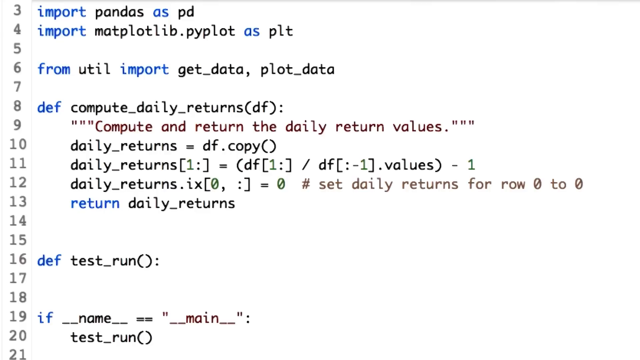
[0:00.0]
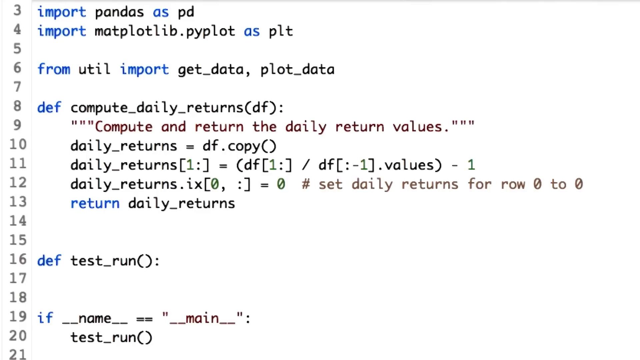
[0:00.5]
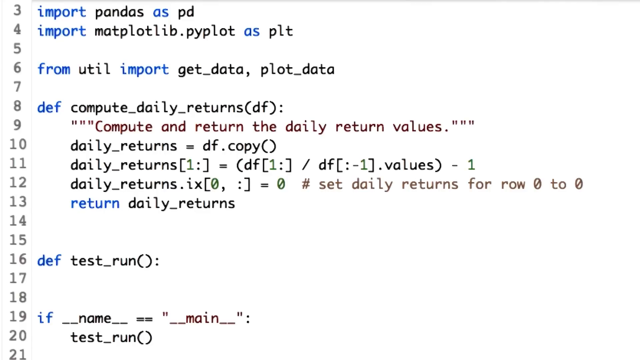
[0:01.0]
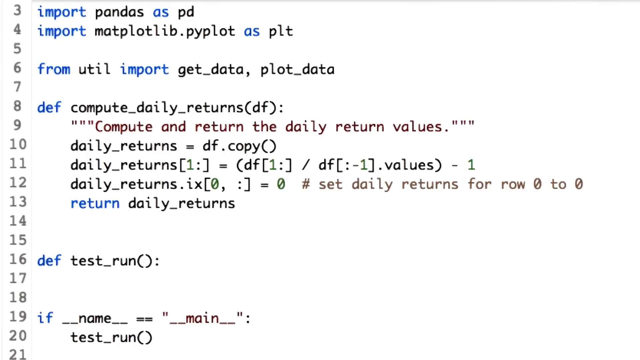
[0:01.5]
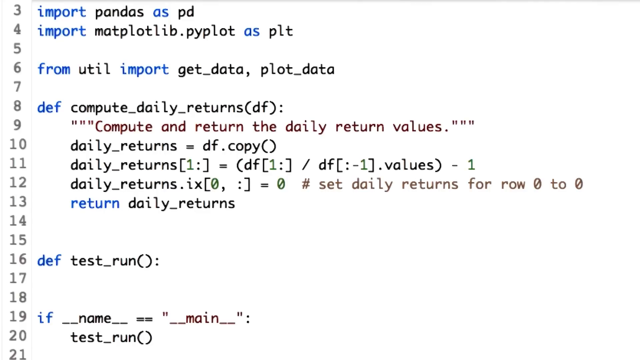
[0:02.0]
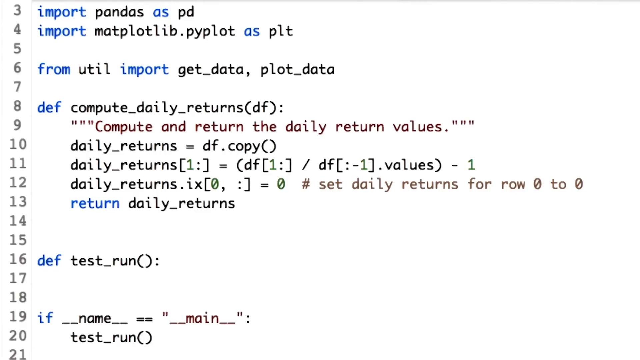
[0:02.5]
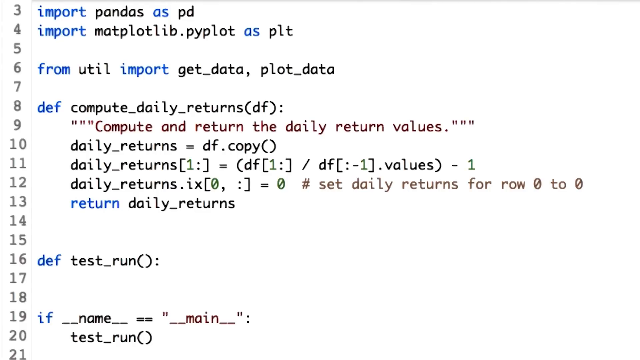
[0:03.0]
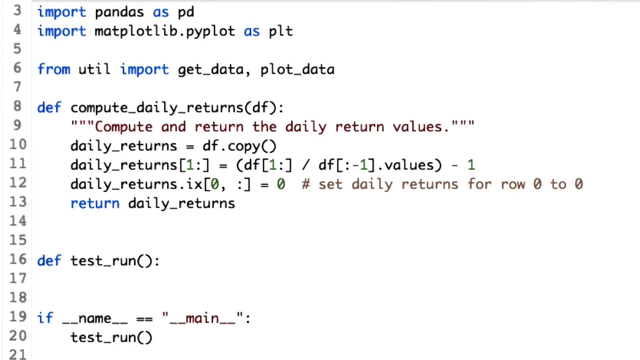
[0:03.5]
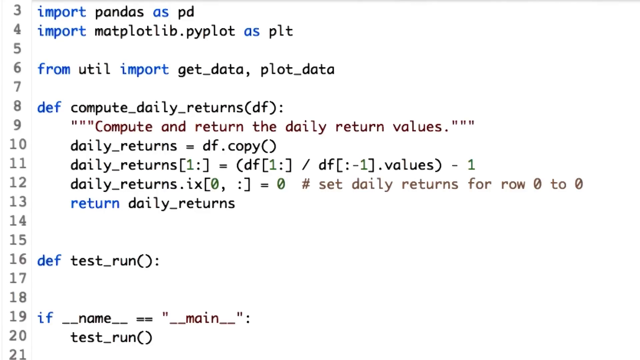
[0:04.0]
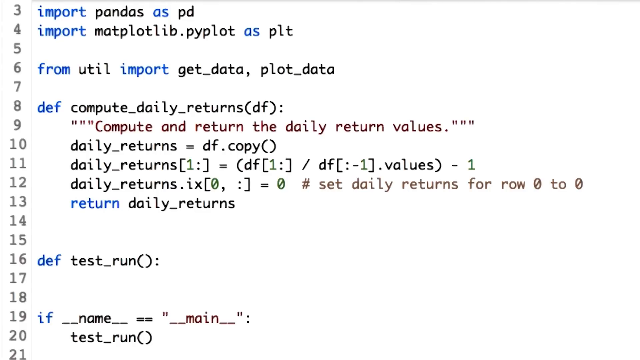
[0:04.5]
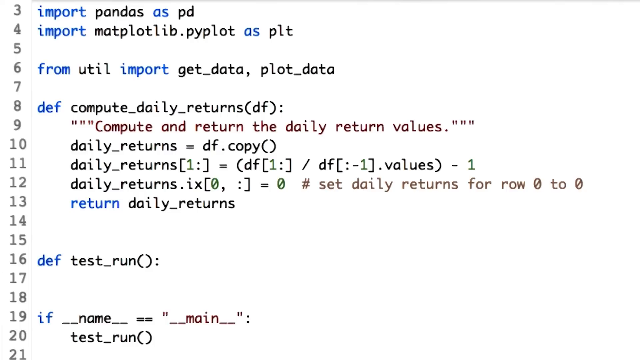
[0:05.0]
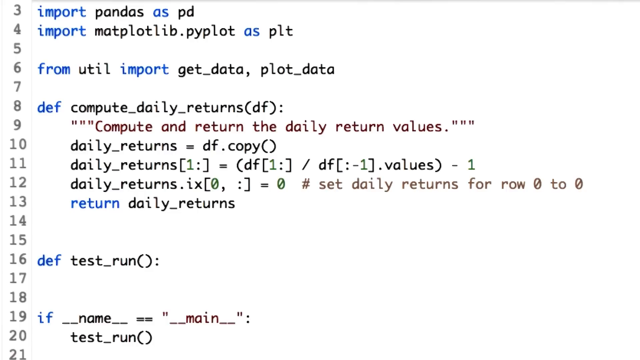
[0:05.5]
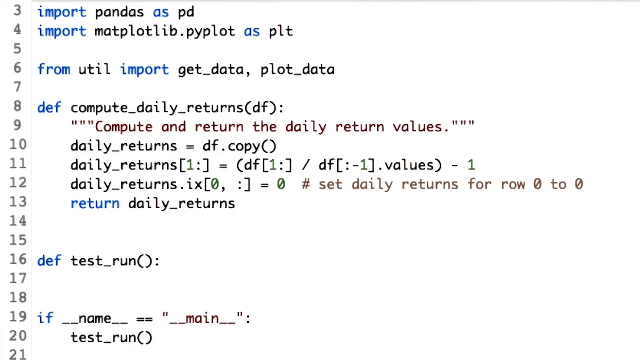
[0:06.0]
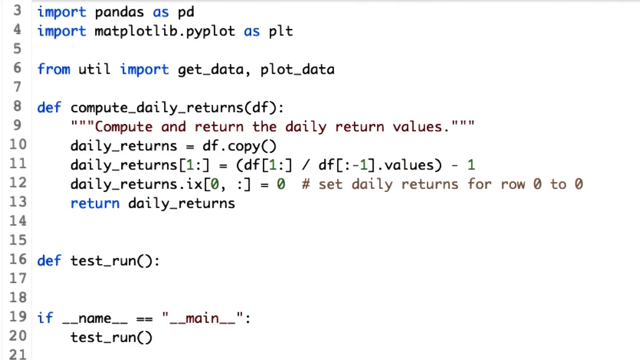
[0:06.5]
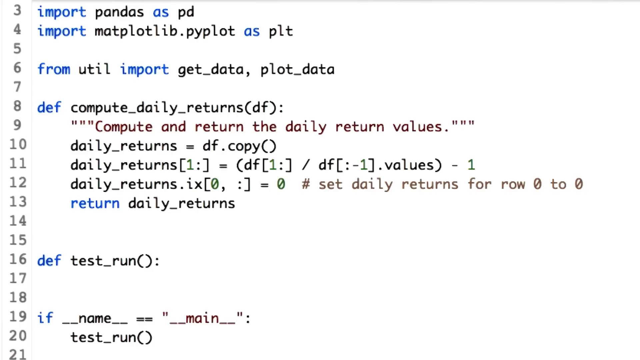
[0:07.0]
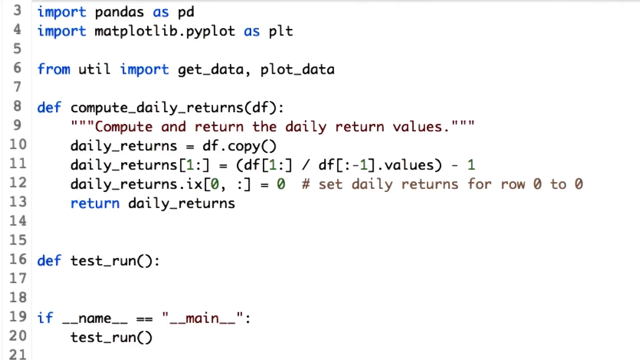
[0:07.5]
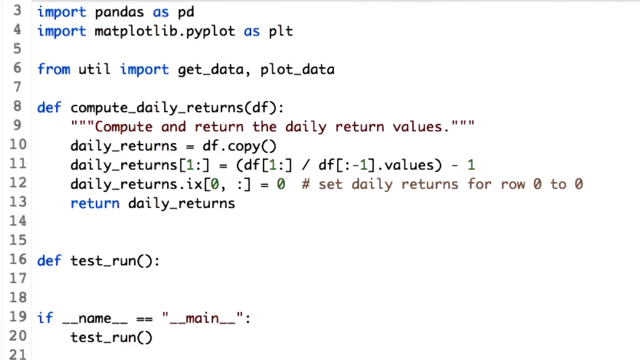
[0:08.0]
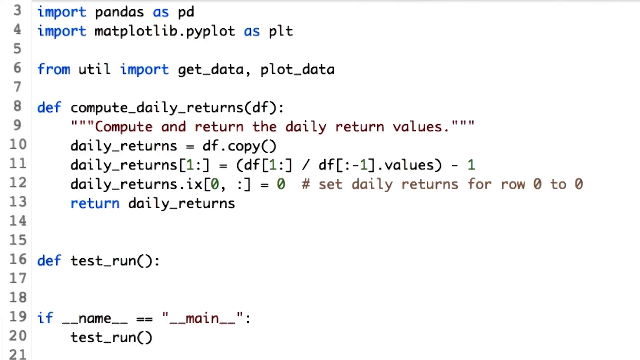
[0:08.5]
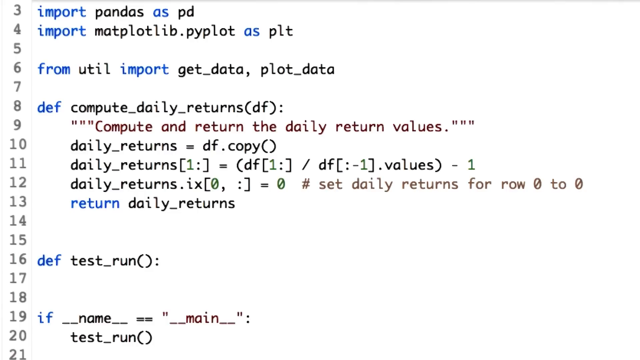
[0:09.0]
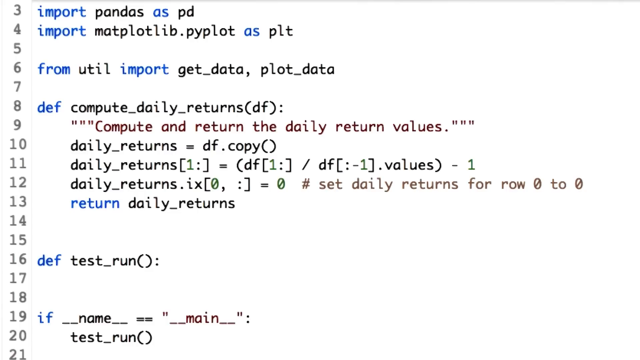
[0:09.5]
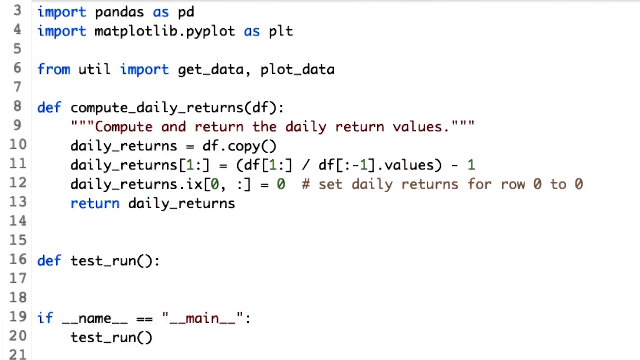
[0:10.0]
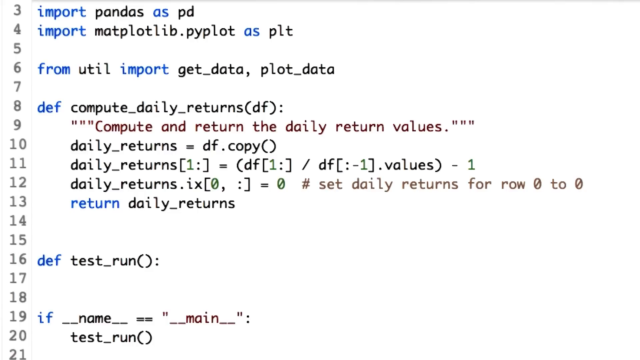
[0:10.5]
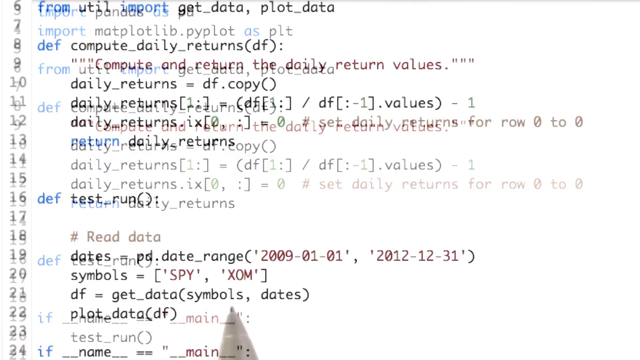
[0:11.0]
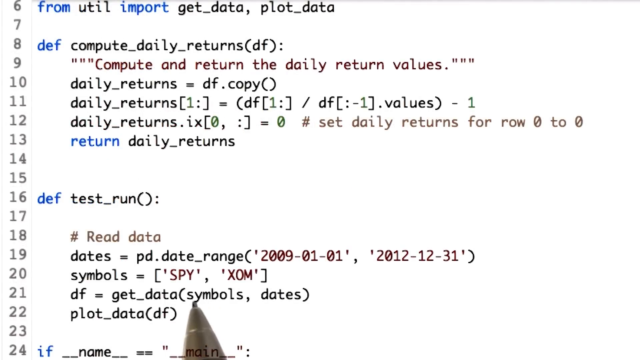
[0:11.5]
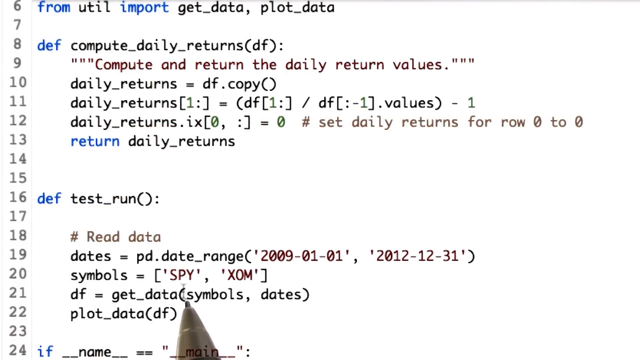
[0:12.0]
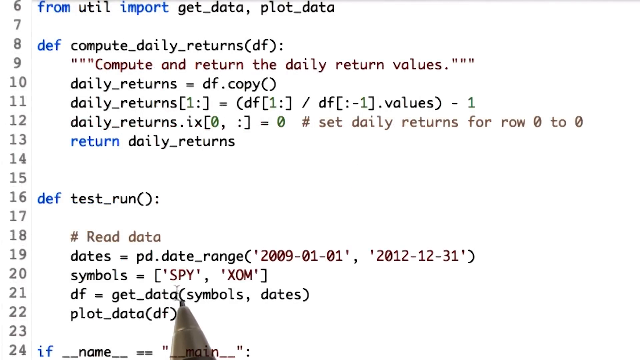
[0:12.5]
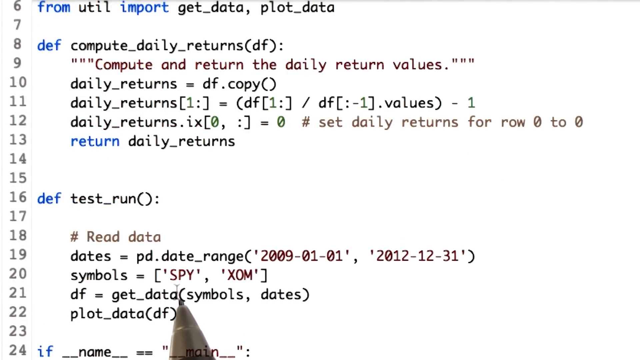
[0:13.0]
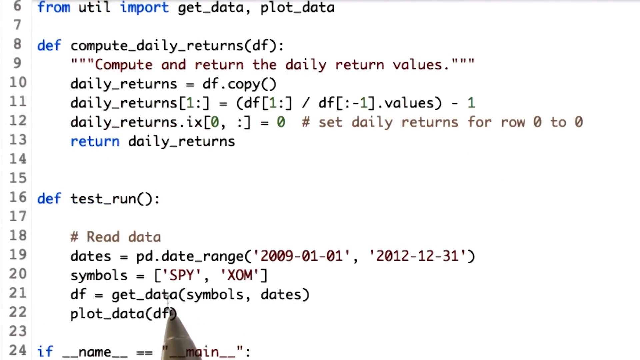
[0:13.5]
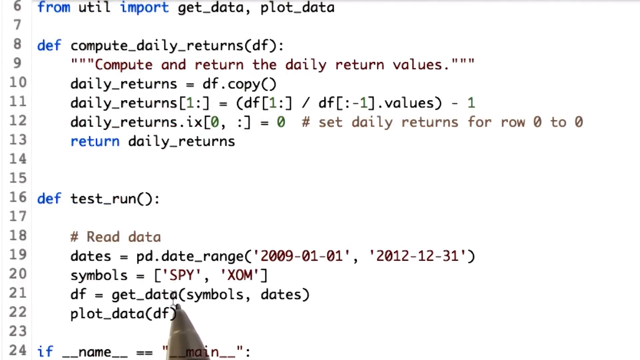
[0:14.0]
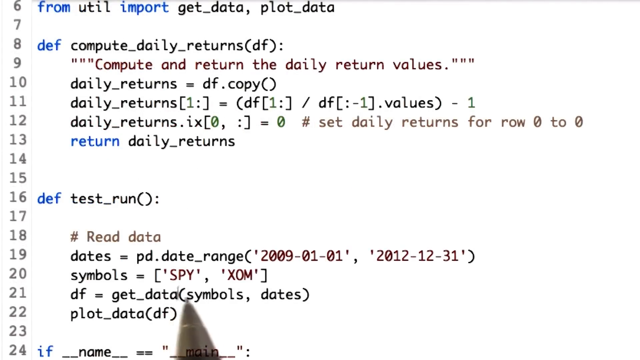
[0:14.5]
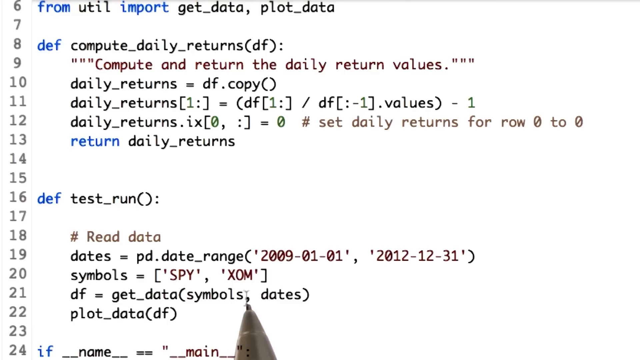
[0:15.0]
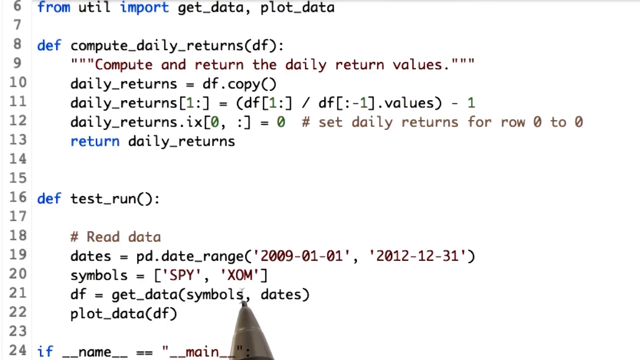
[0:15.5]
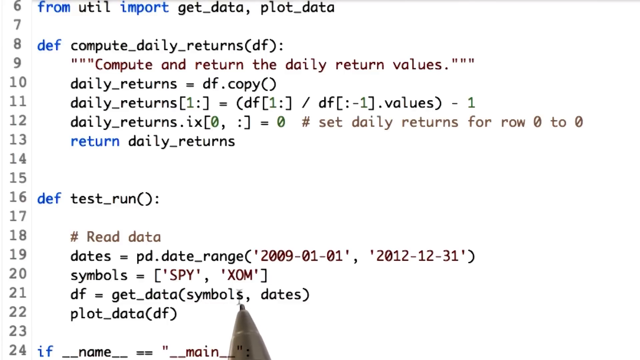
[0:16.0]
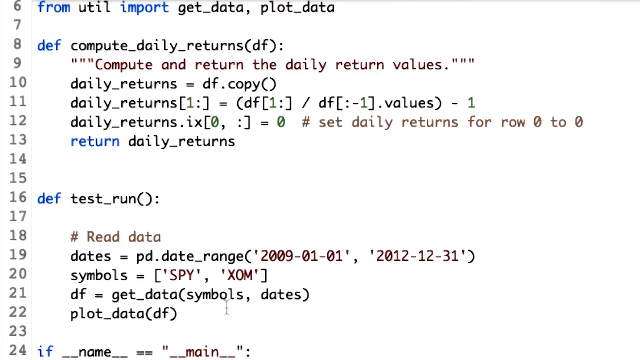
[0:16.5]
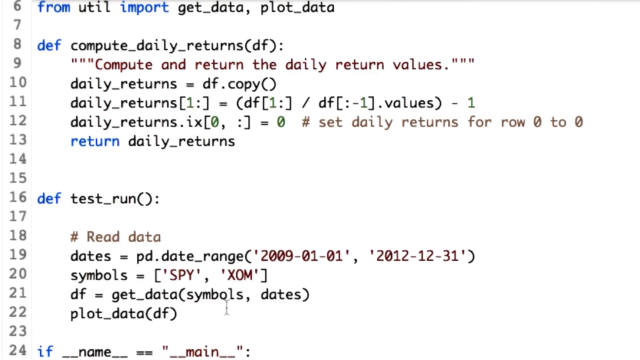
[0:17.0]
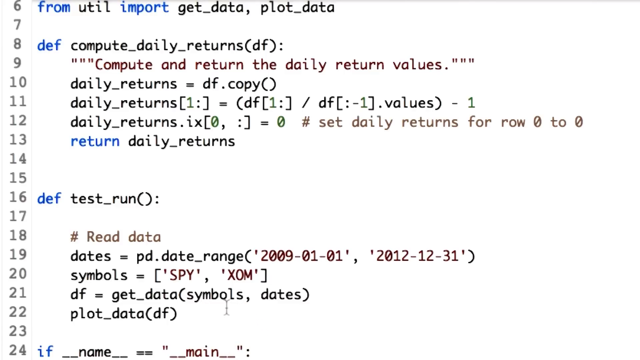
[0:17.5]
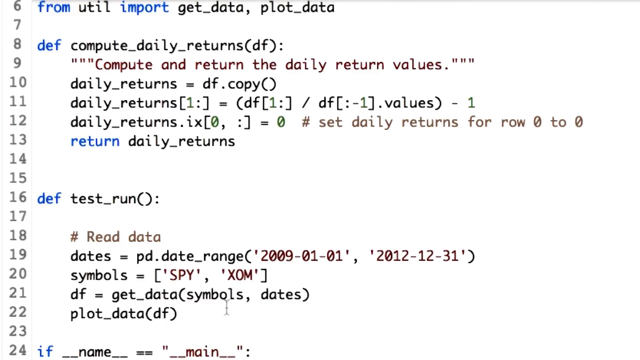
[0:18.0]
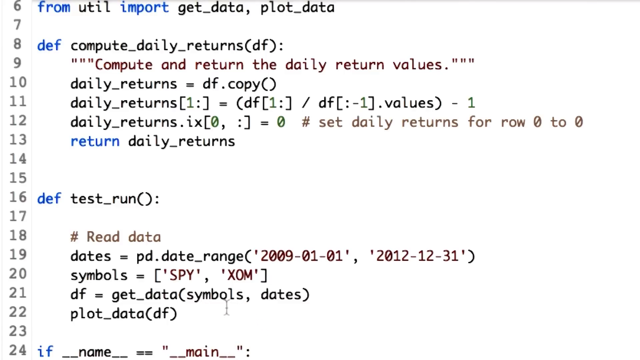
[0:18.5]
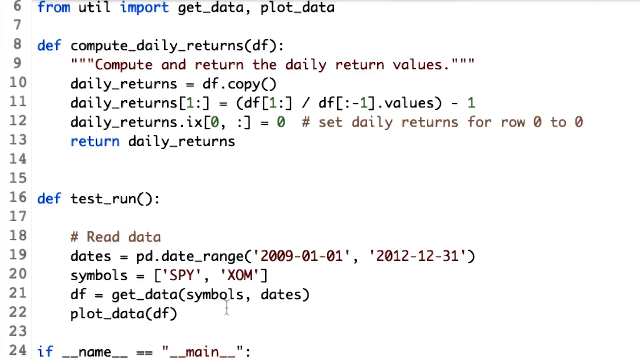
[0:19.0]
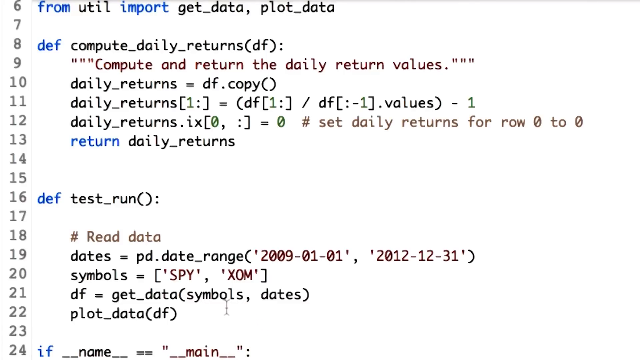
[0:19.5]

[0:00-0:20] A white screen that appears to be from a notepad or something similar fills the view, with rows numbered on the left side from 3 down to apparently about 21. Most of the white background is filled with code. With a bit of a fade, the screen transitions to a different screen where the row numbers on the left now run from 6 down to 24, so the view has moved down a few rows and the code still holds elements from the previous page. At the bottom of the screen there is what appears to be a black pen, which seems to be pointing to parts of the code at the bottom of the screen. As it does, a typing cursor appears: a vertical line with small lines at its top and bottom. It appears that someone is pressing down on the screen with the pen to control the cursor.